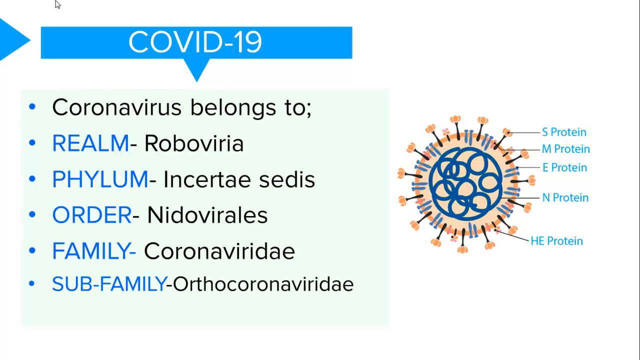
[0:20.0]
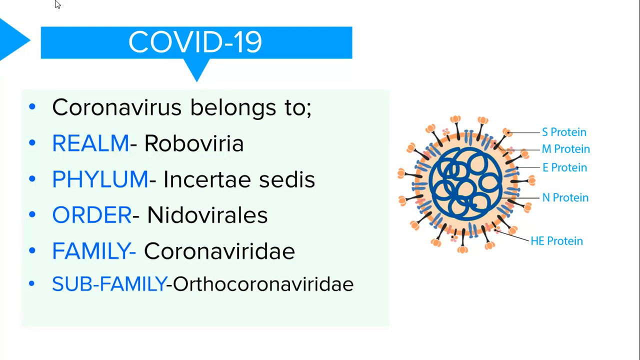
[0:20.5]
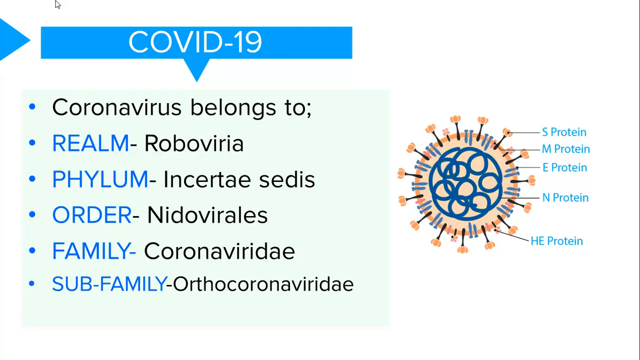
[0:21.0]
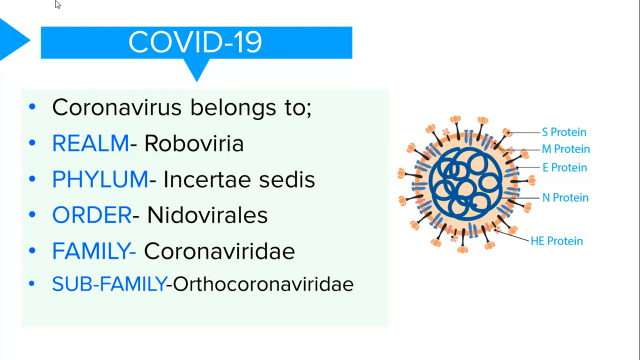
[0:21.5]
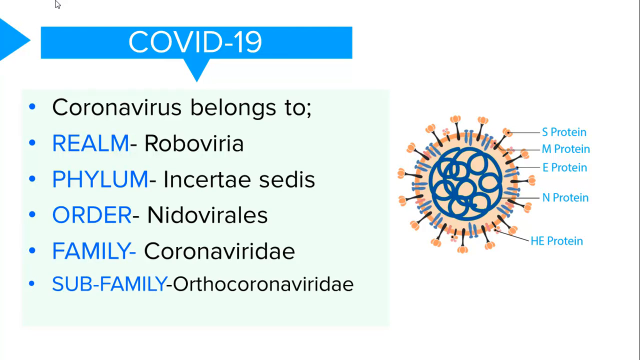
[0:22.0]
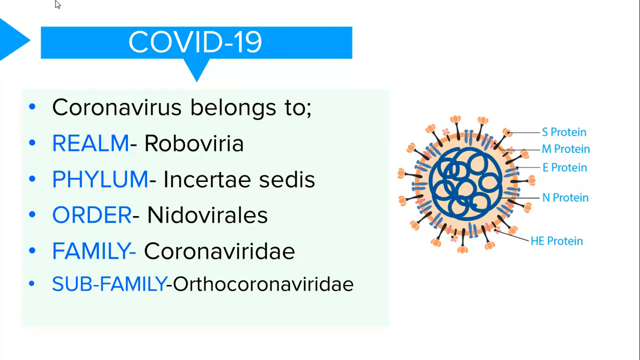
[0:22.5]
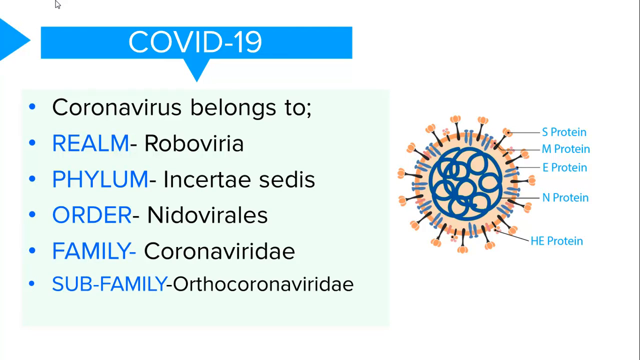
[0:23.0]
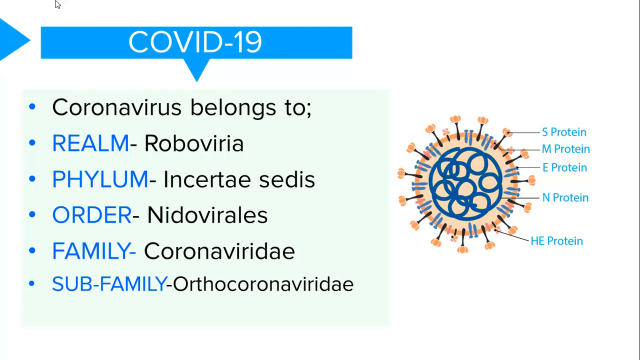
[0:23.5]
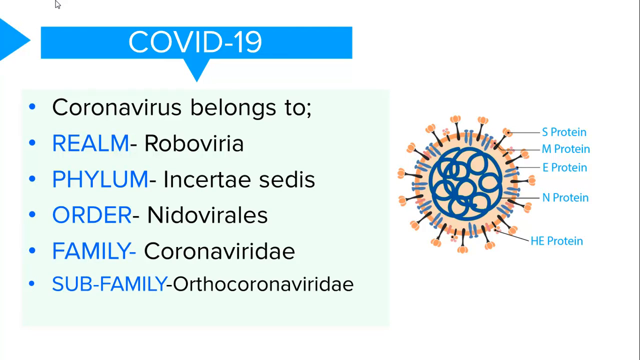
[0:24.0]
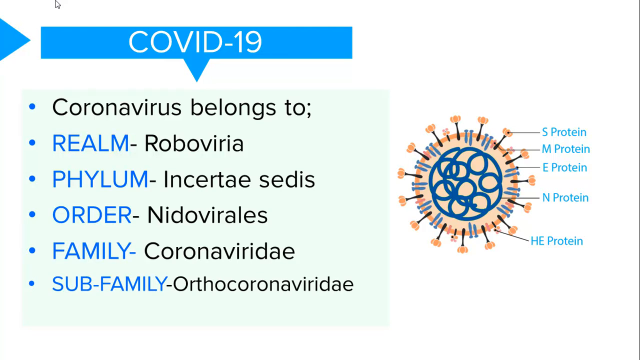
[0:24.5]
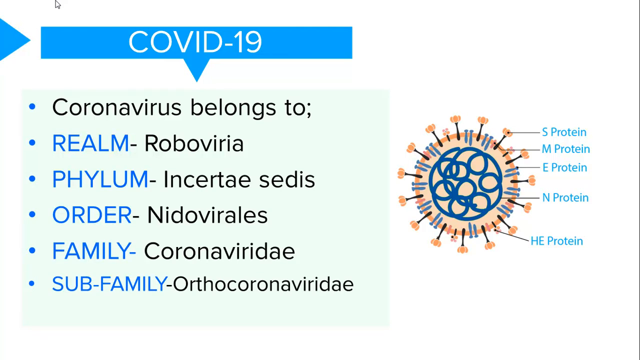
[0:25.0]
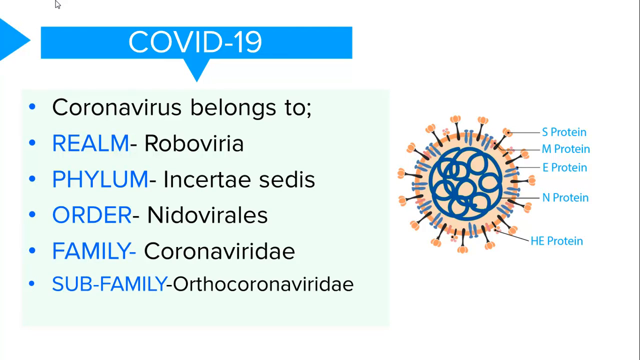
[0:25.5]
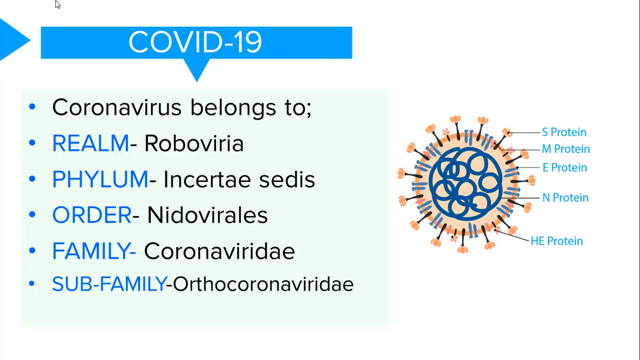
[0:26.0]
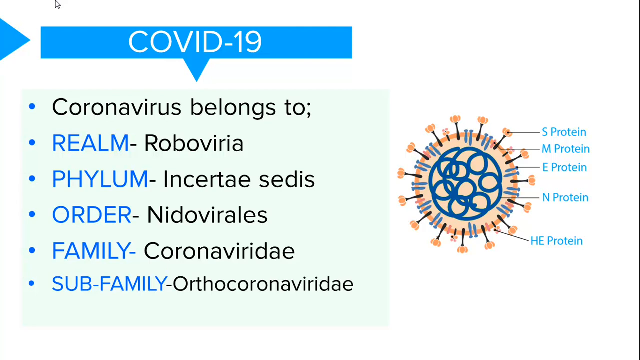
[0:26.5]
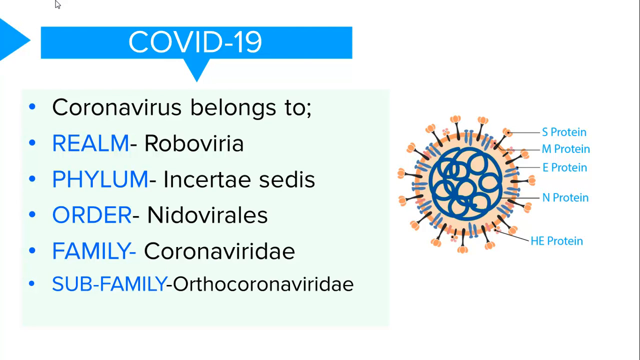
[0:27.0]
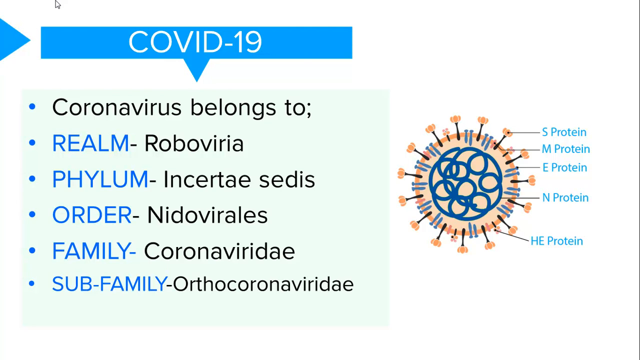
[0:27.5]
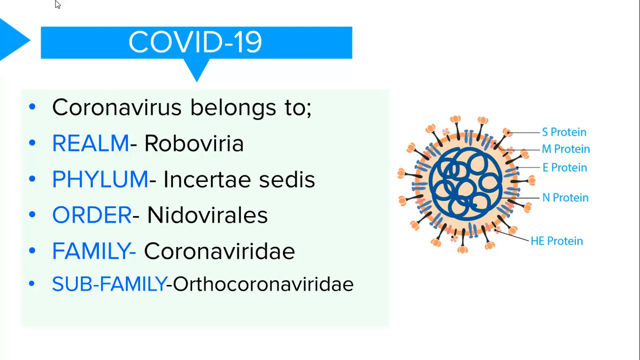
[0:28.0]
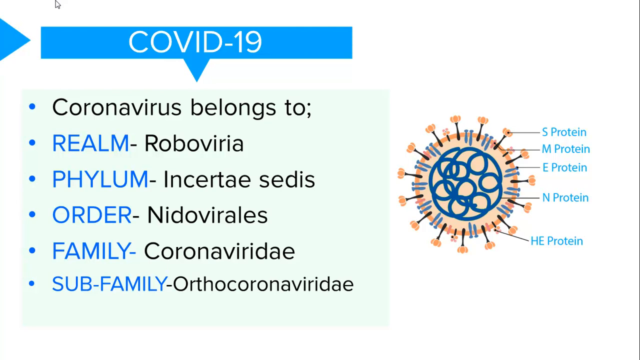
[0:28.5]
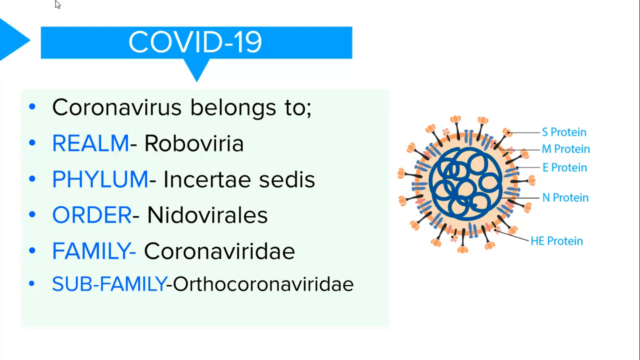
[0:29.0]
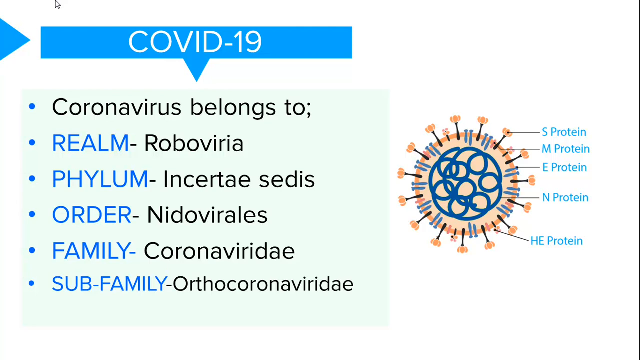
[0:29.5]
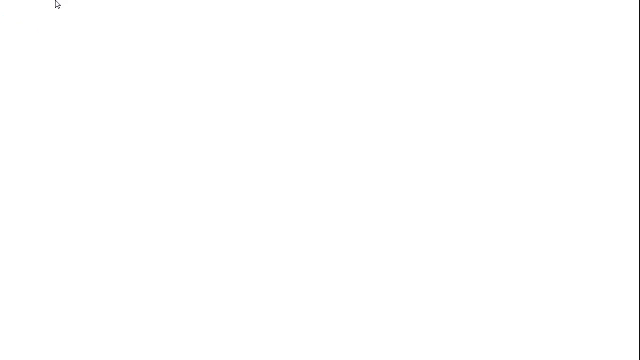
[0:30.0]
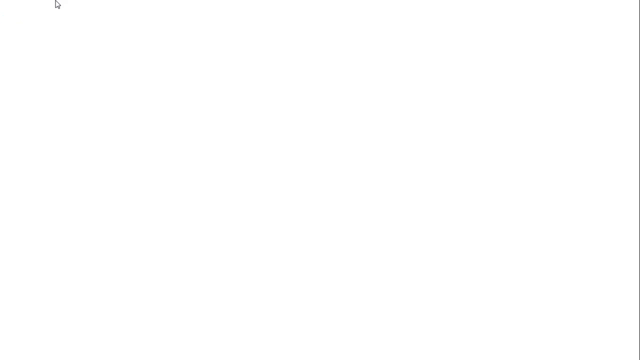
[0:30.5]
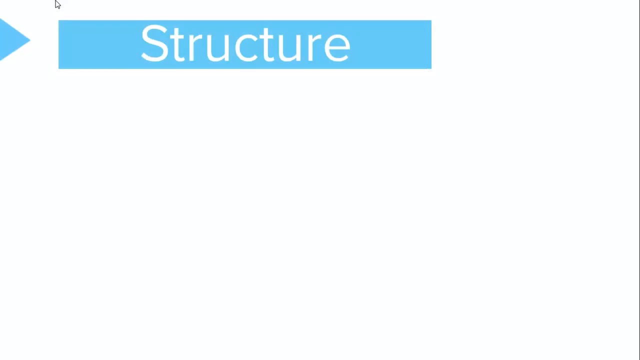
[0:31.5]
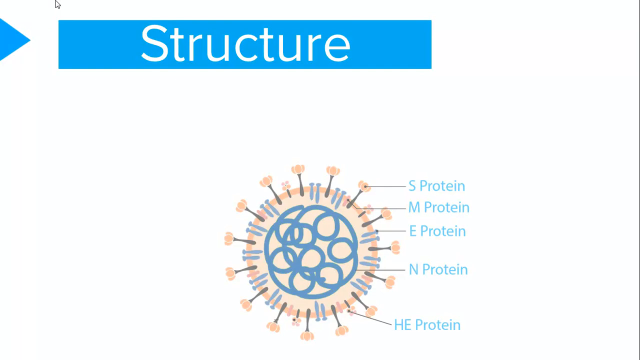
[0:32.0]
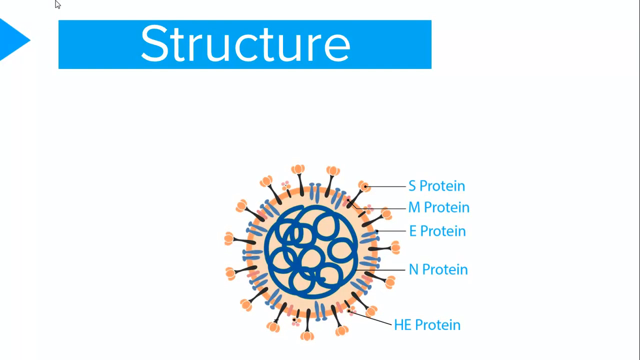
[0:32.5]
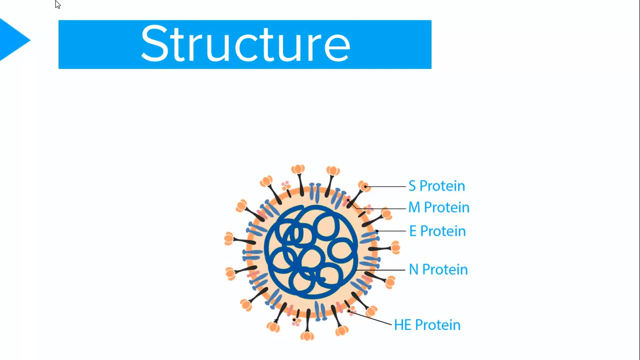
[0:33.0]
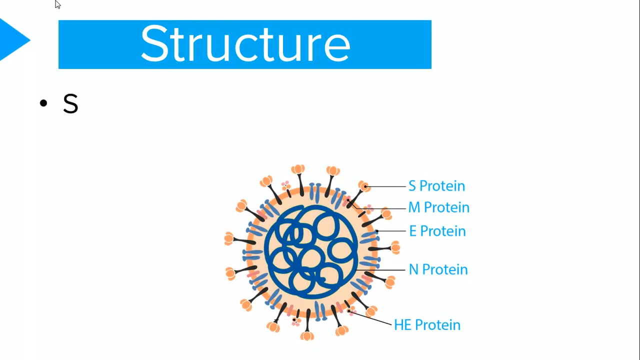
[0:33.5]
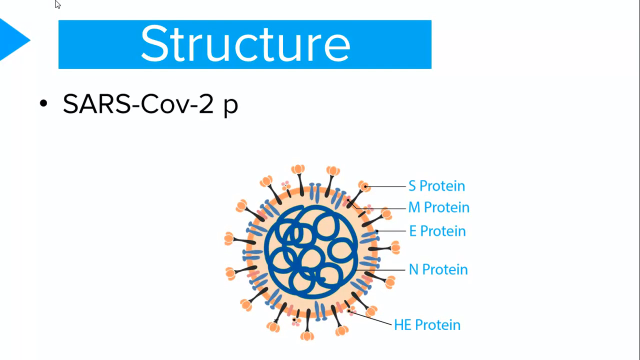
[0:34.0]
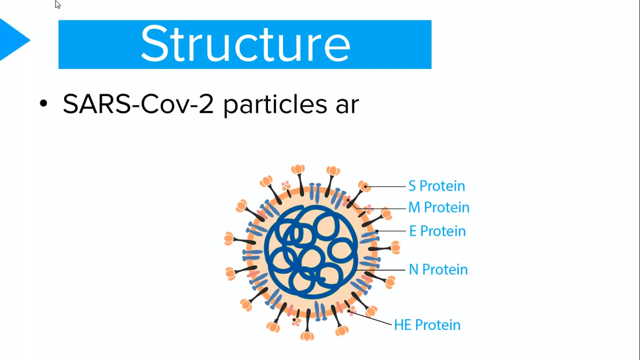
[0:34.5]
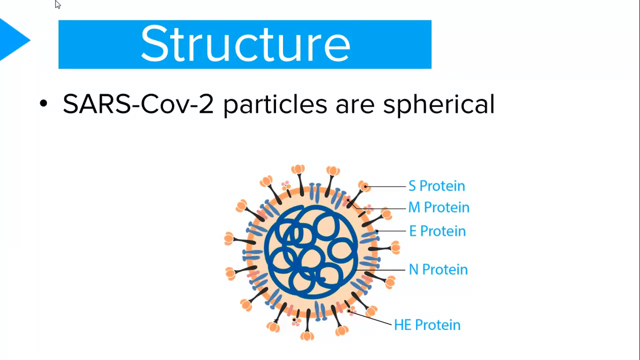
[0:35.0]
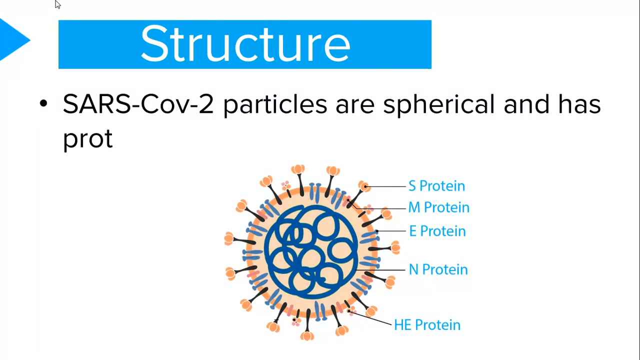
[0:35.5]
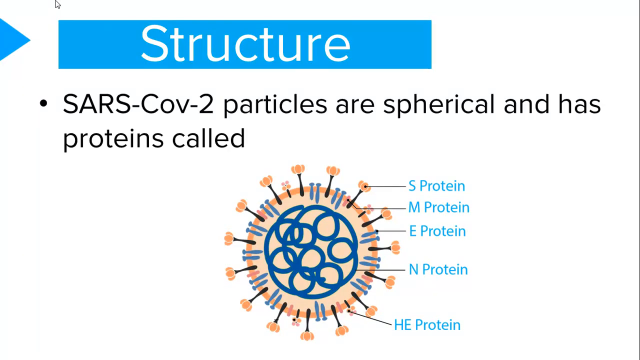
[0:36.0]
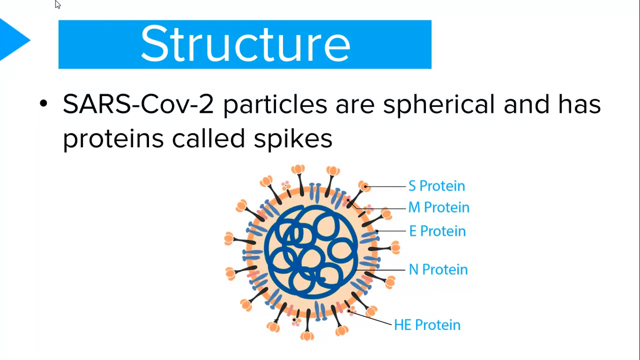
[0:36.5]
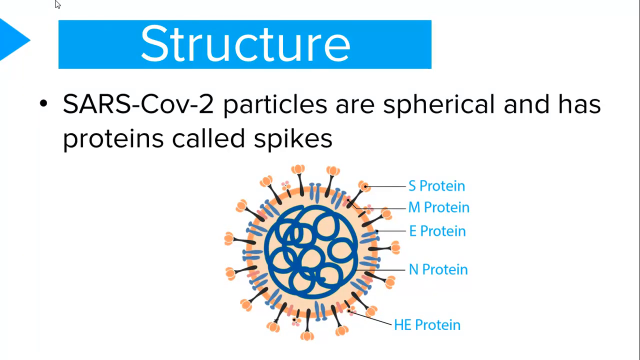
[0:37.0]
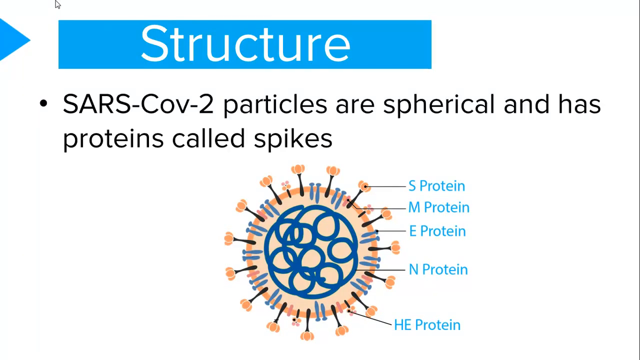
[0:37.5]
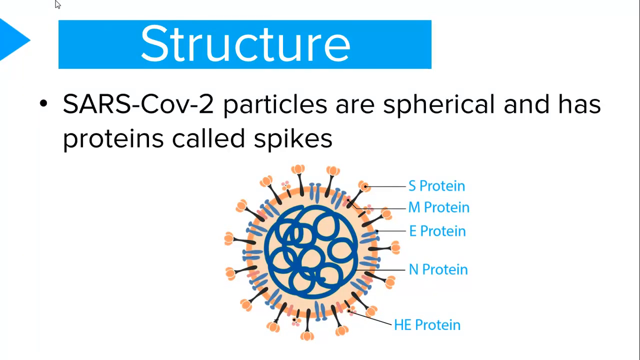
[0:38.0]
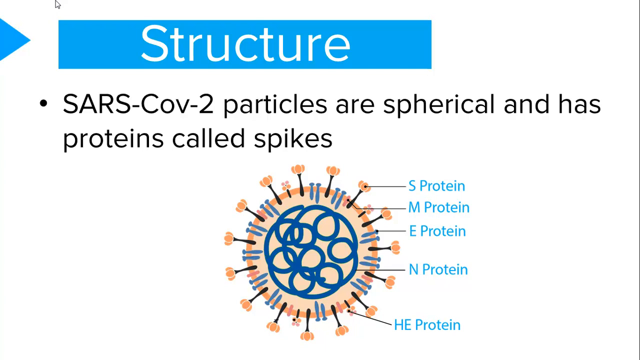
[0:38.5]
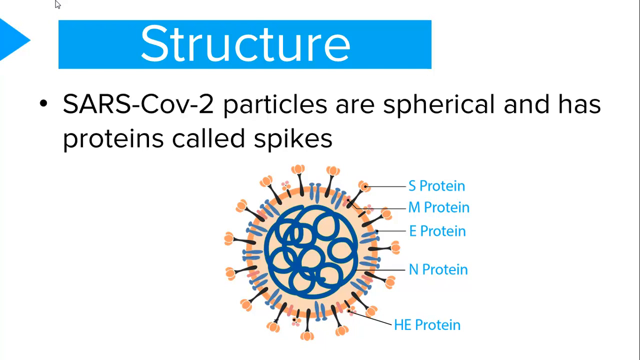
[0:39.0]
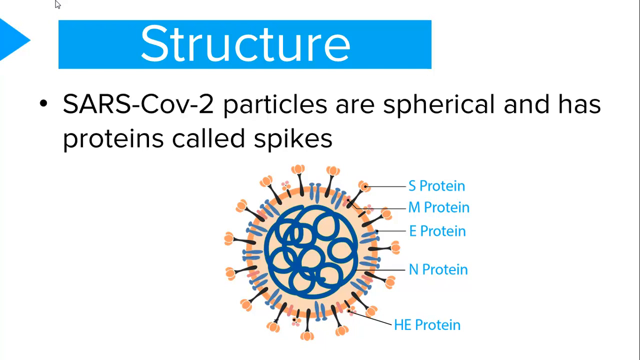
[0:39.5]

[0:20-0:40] A rectangle that says "COVID-19", with light blue on top of it, sits above the COVID-19 related information, which is listed underneath on a mint green background. A triangle is on the left side of the words "COVID-19". The next slide shows the same image of the molecular structure of the COVID-19 virus. The page title is at the top in a blue rectangular border, reading "structure" in white text, with the same rectangle from the previous slide to the left of it. Black text begins typing underneath the title as a bulleted list, stating that SARS COVID particles are spherical and have proteins with spikes. The spikes can be seen coming out of the structure shown below.